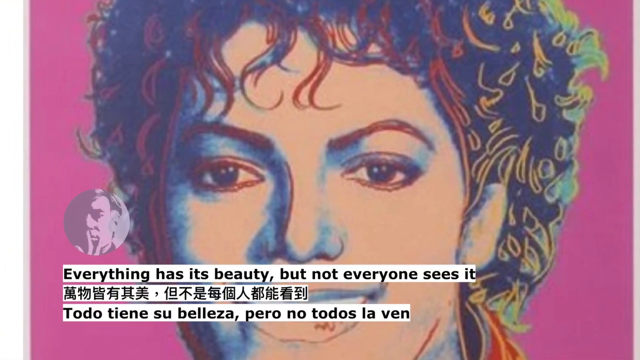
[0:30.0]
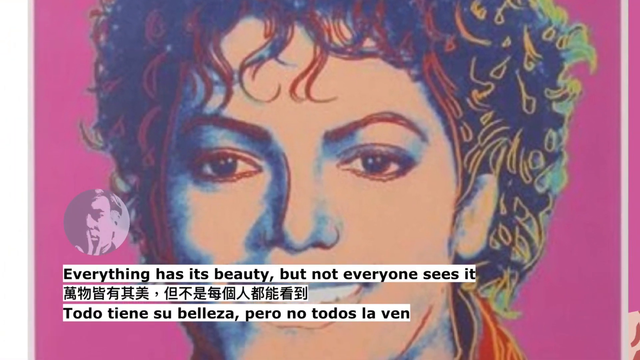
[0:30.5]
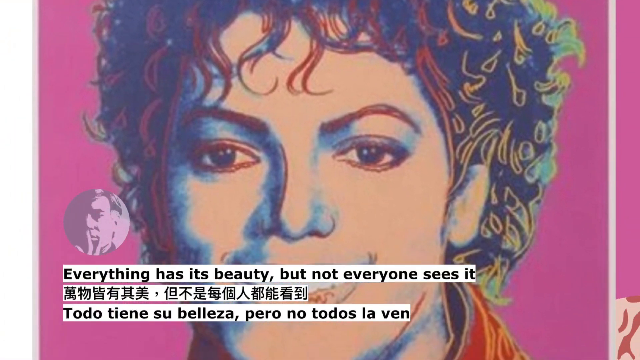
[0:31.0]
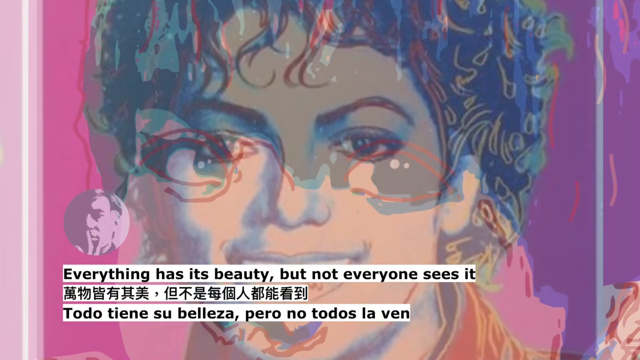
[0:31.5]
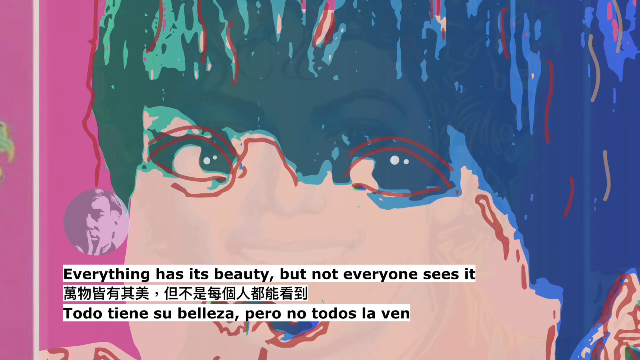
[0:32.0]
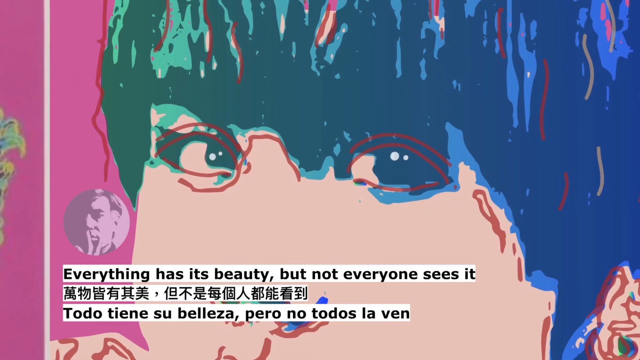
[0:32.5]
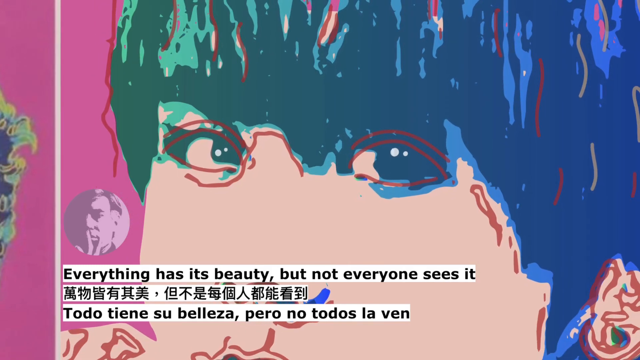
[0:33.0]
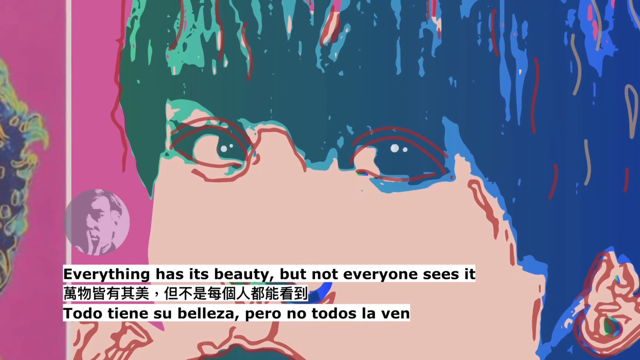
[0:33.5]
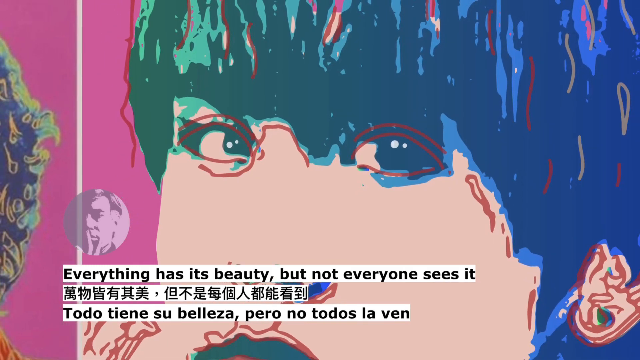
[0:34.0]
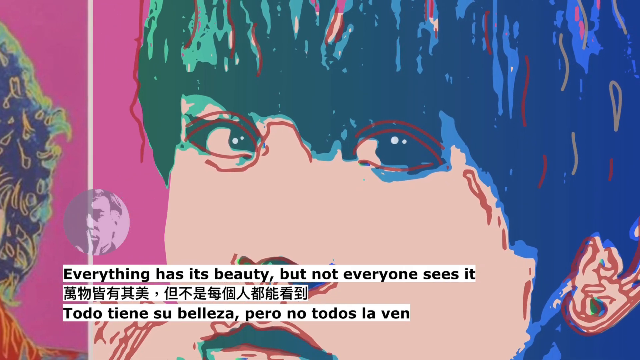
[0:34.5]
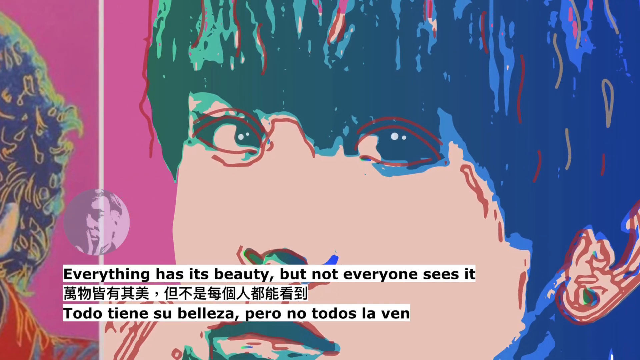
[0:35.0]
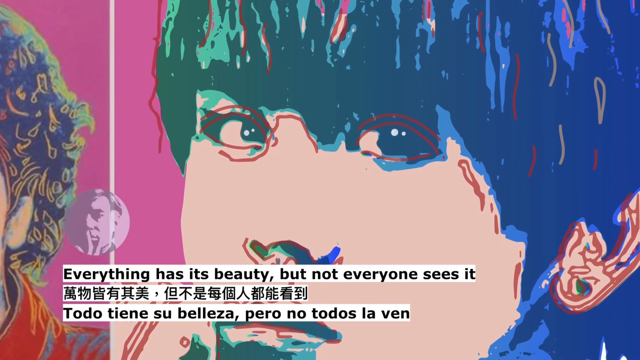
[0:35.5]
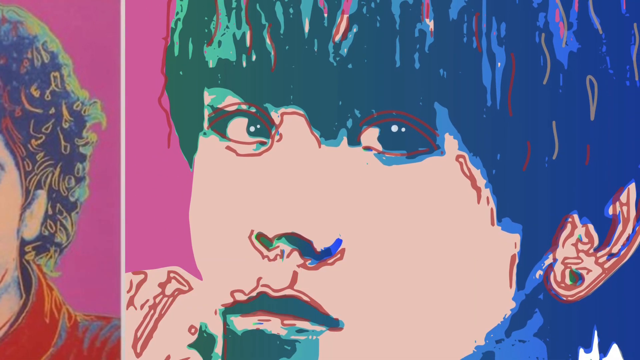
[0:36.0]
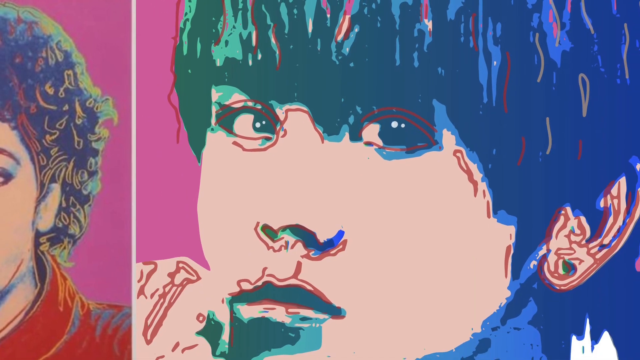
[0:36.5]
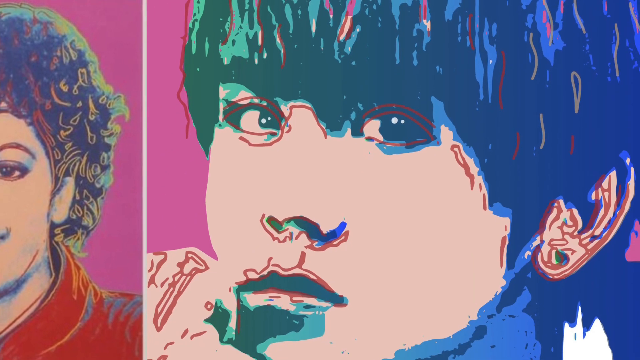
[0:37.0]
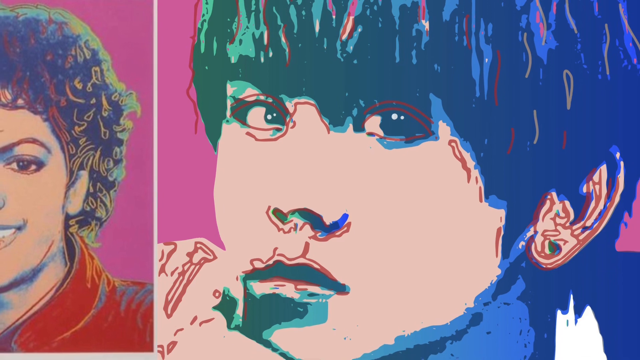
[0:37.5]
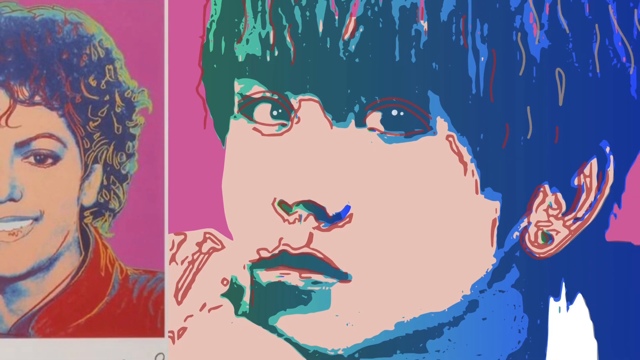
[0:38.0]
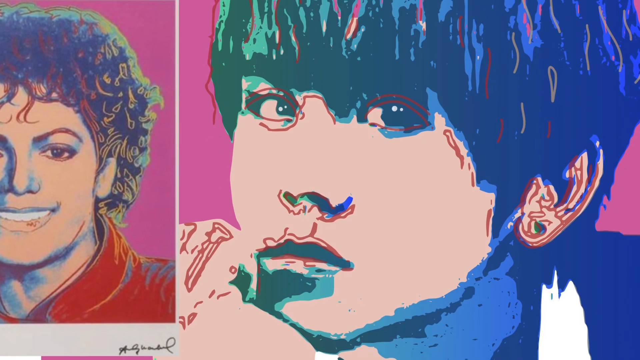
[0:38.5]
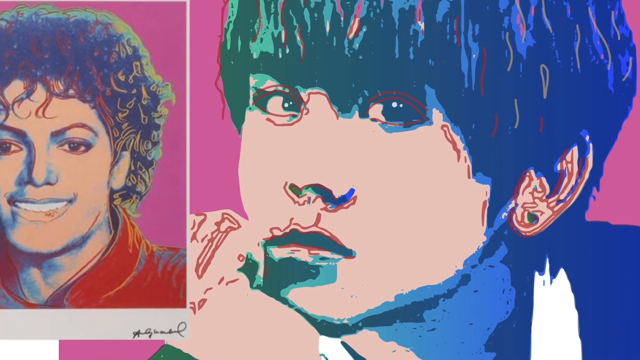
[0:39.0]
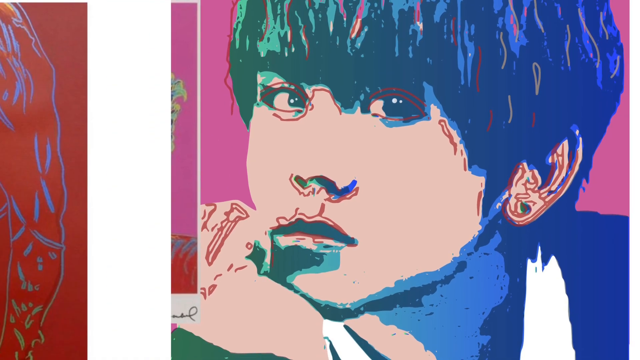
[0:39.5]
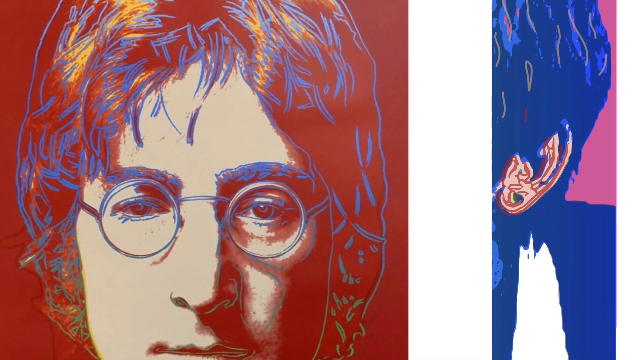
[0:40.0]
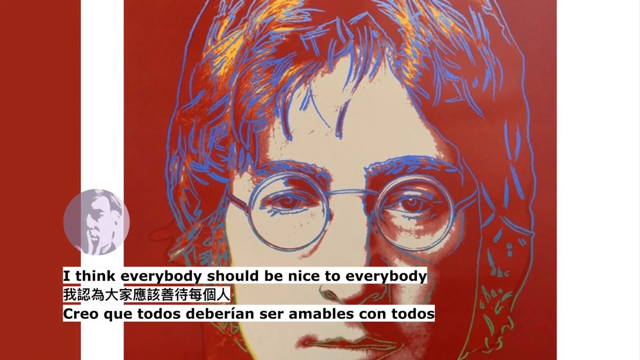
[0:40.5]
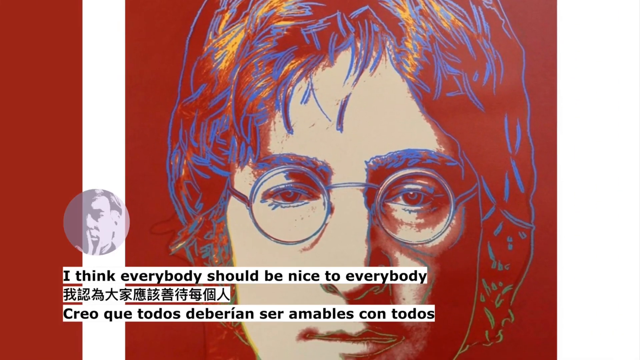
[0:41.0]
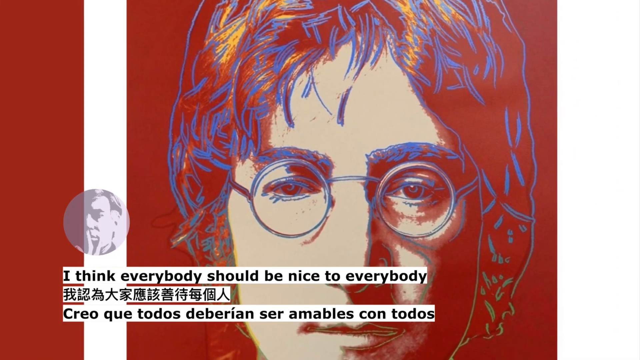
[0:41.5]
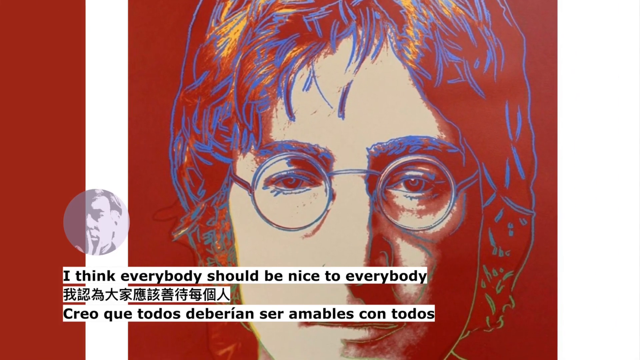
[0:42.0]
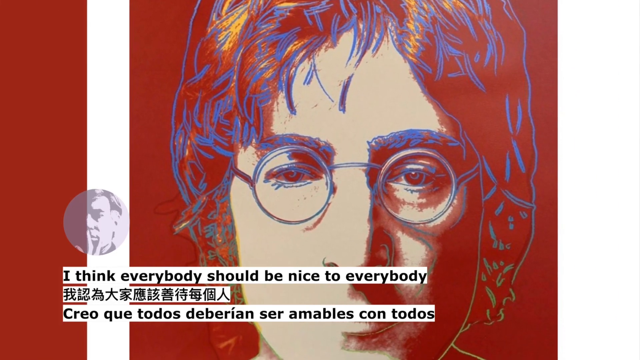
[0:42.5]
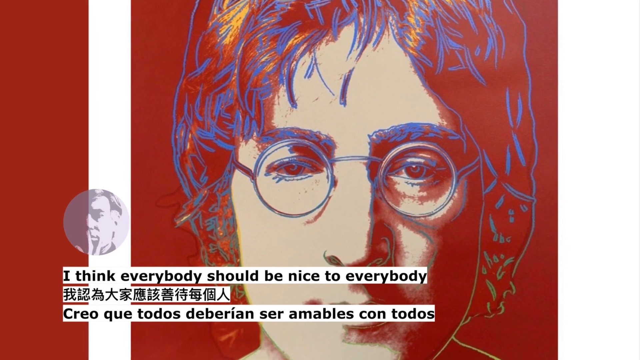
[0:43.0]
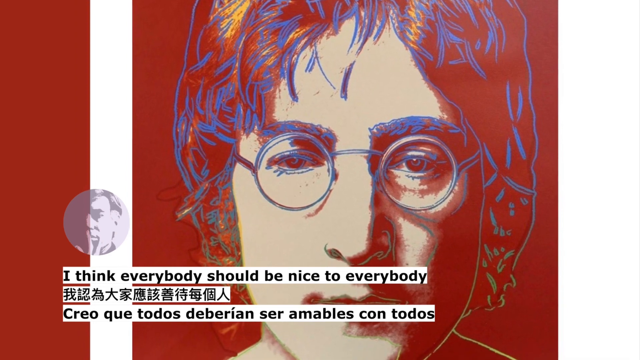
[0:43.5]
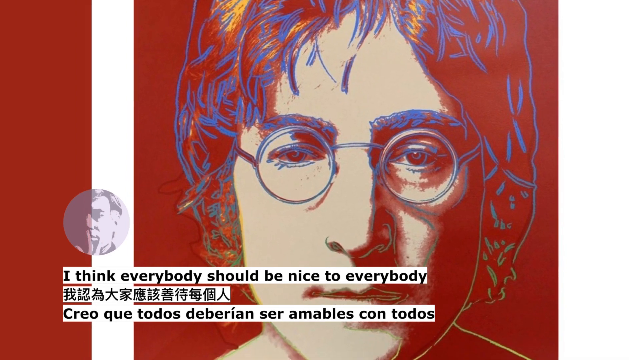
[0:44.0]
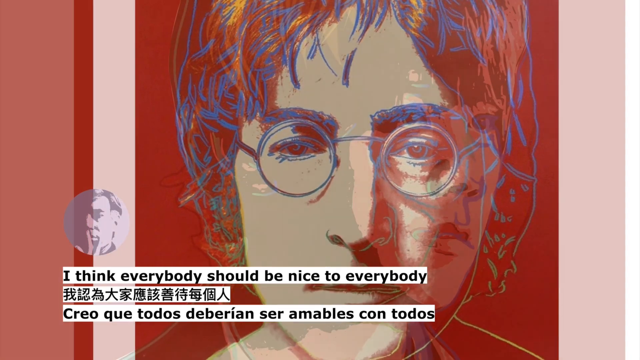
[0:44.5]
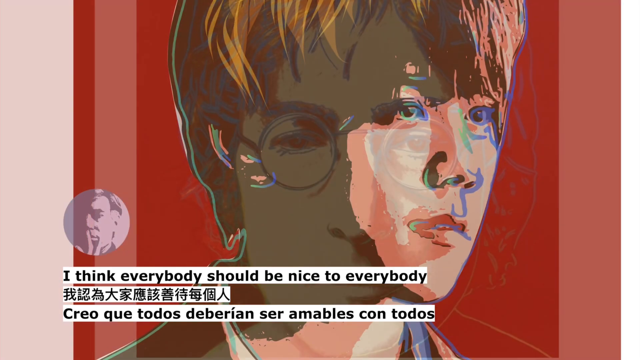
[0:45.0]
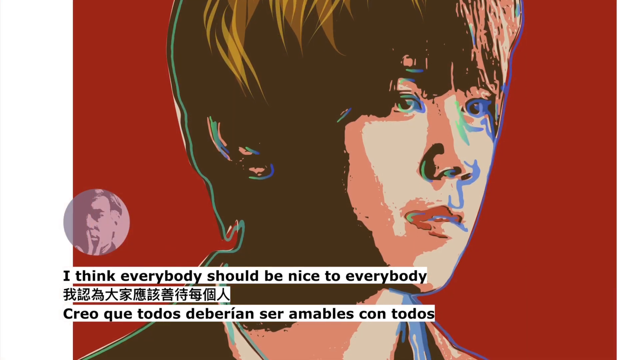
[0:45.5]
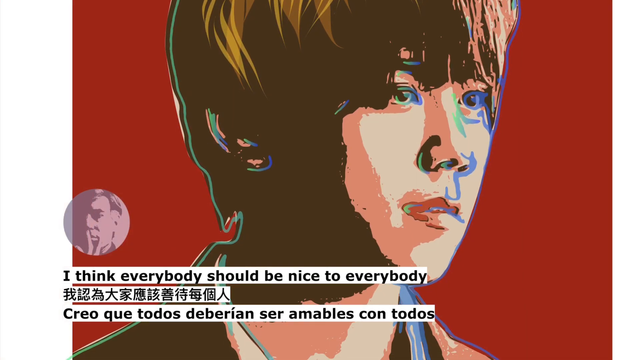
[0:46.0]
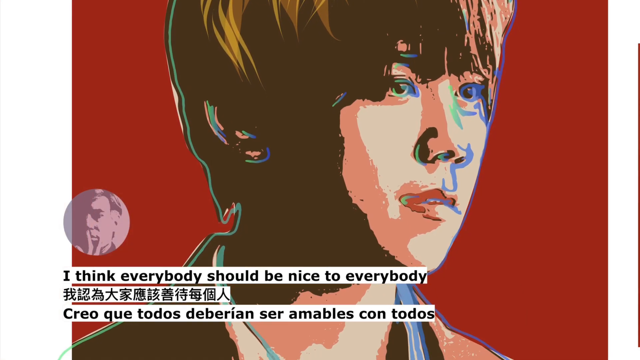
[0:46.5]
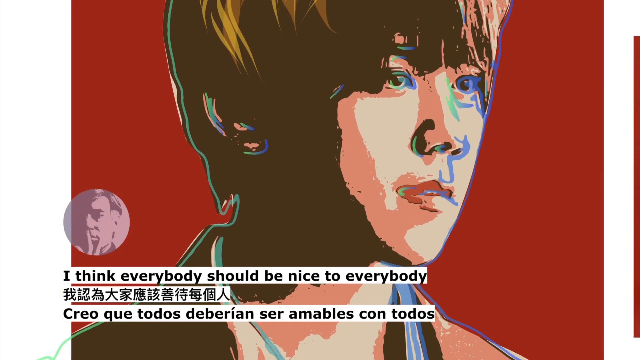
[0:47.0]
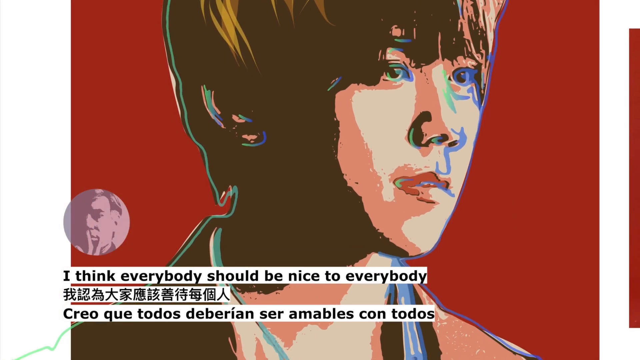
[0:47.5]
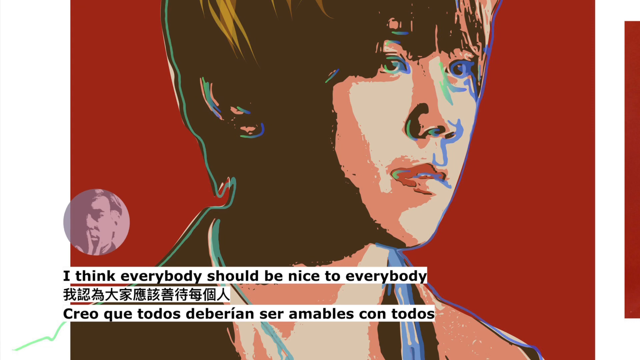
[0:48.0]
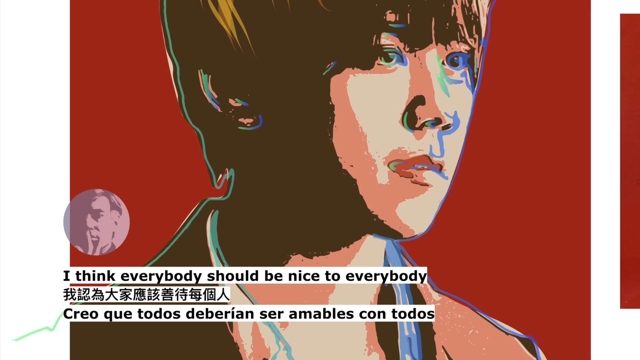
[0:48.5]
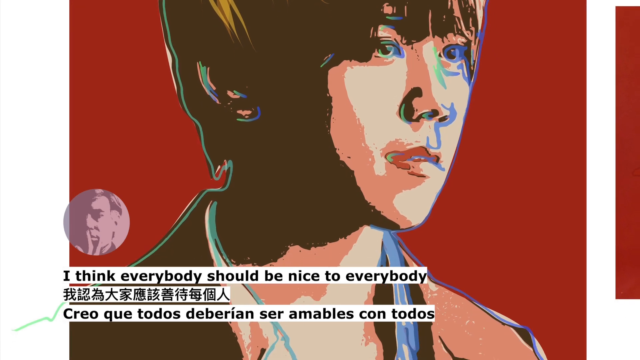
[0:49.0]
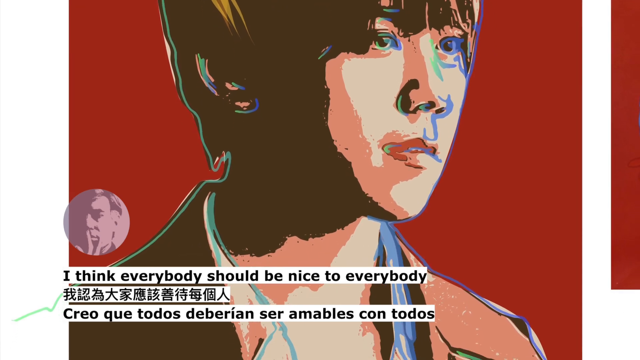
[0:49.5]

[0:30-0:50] Against a purple background, a piece of art appears to show Michael Jackson, with his eyes, eyebrows and black hair visible, a bit of red on the front around the forehead, and yellow and powder green on the far right. A light pink image in a circle is on the left side of the man's face. Underneath, black lettering on a white background reads "everything has its beauty but not everyone sees it", with another language below that and a second language below that in the same colors. Next, what looks like another person appears, with blue and possibly dark green hair and red outlines through the hair and around the eyes, ears, nose and mouth; the face is mostly pale white and the neck is blue. The next image has a crimson red background with white lines on the left and right sides and looks like John Lennon, showing his eyes, glasses and hair, with the outline of the face in blue and some pale white on the face. Black lettering underneath on a white background reads "I think everybody should be nice to everybody", with two separate languages just below. An image of what is probably the artist is in a grayish circle, with the outline of the face visible on the left side.